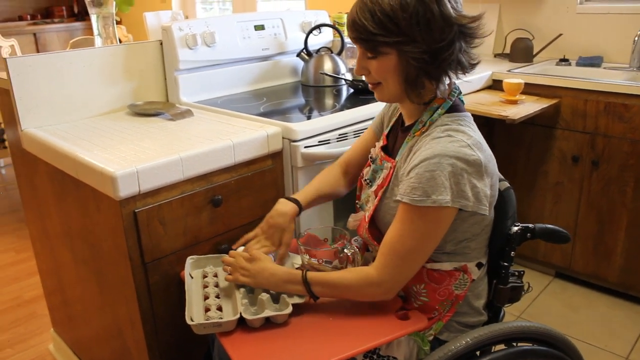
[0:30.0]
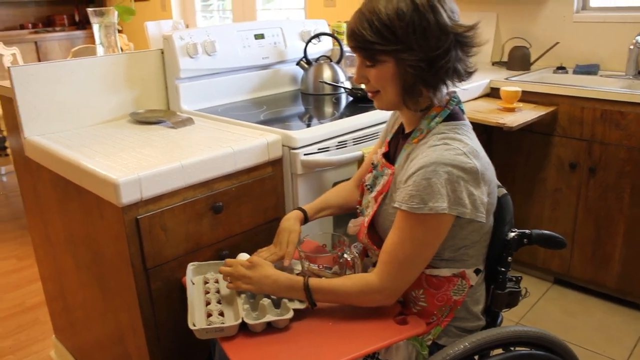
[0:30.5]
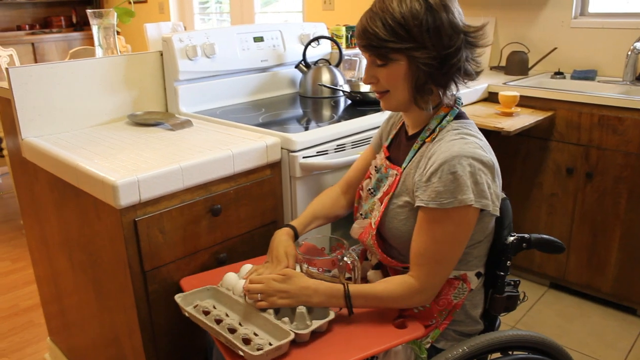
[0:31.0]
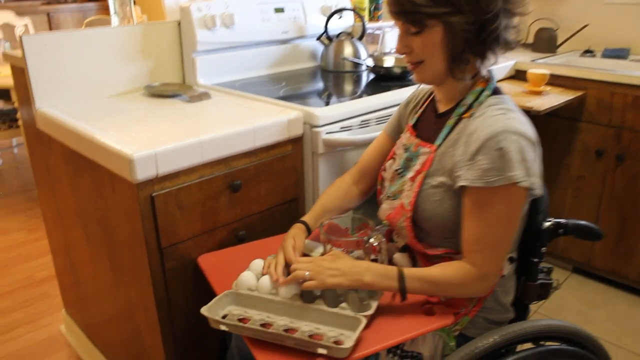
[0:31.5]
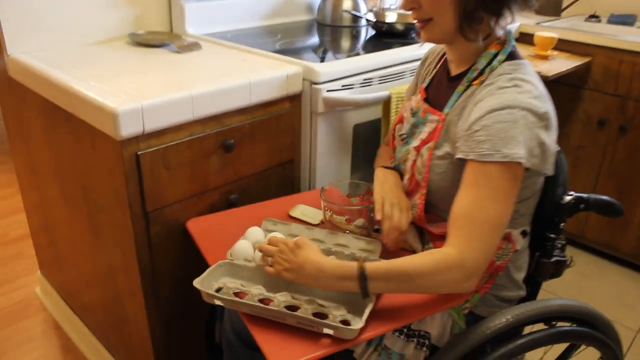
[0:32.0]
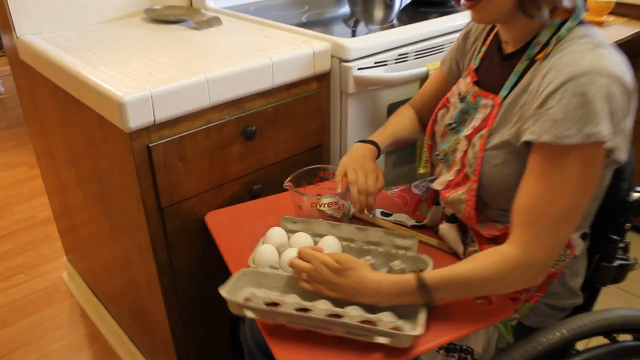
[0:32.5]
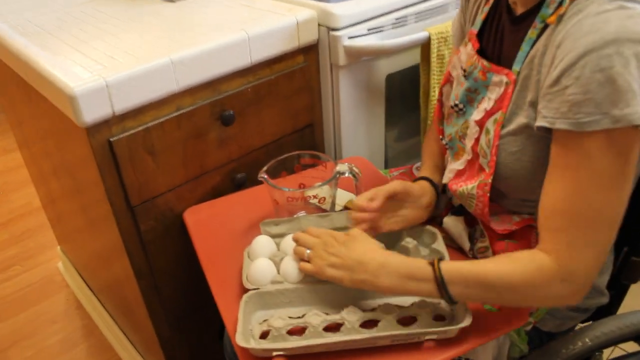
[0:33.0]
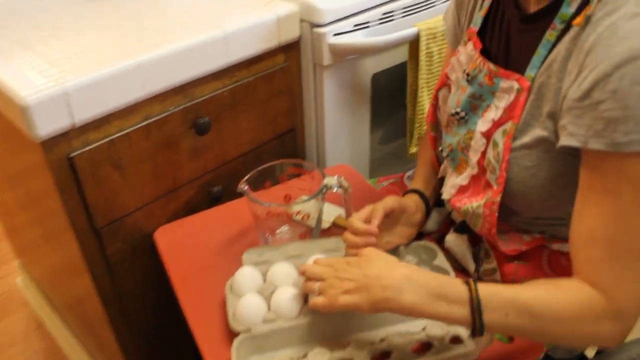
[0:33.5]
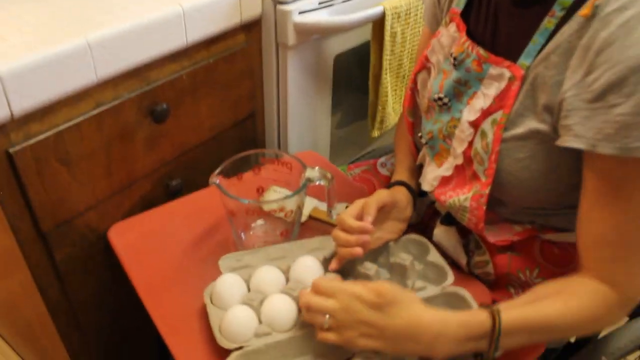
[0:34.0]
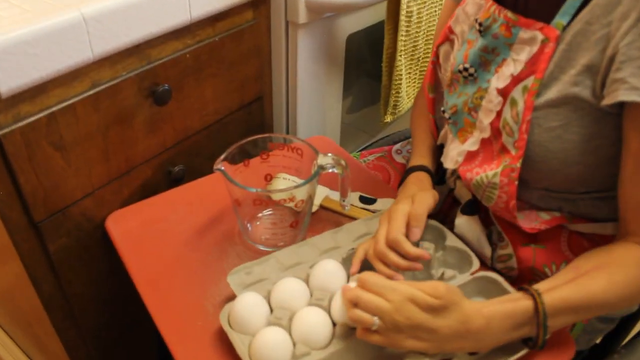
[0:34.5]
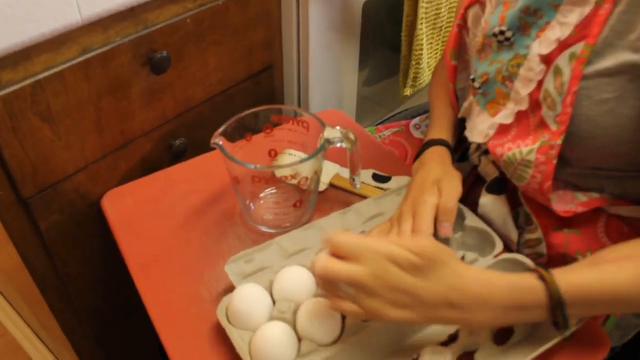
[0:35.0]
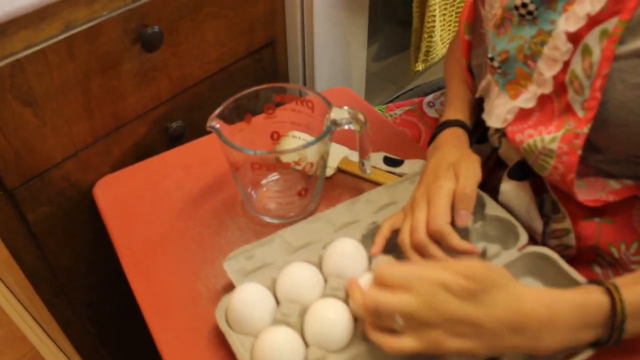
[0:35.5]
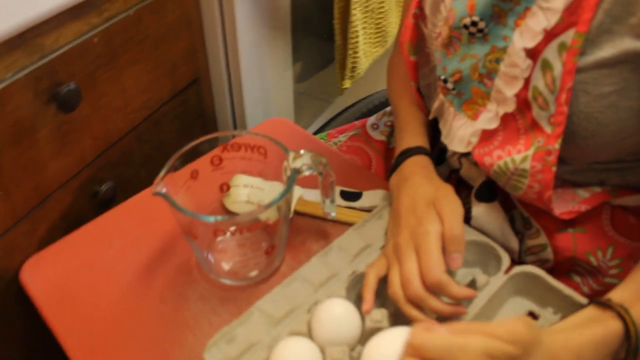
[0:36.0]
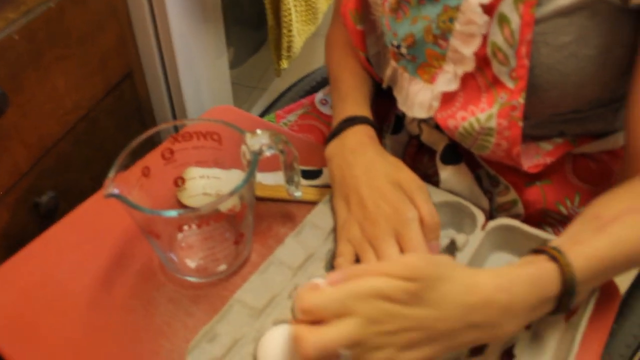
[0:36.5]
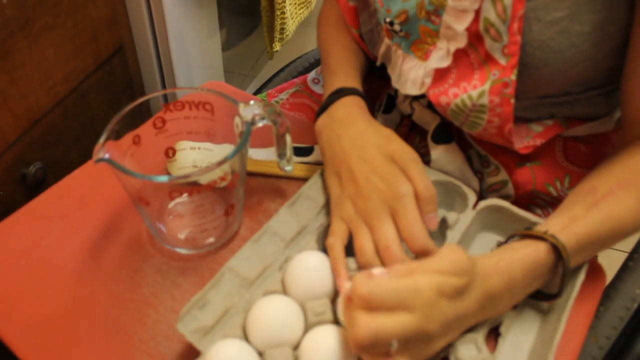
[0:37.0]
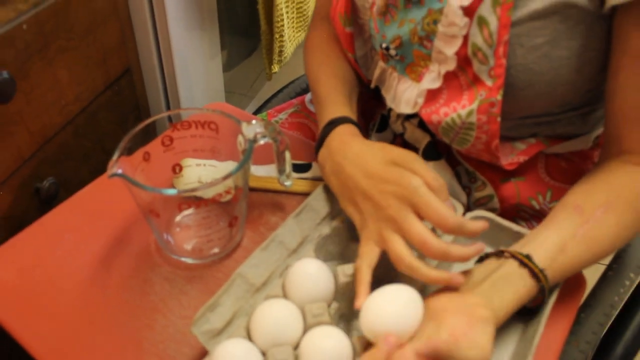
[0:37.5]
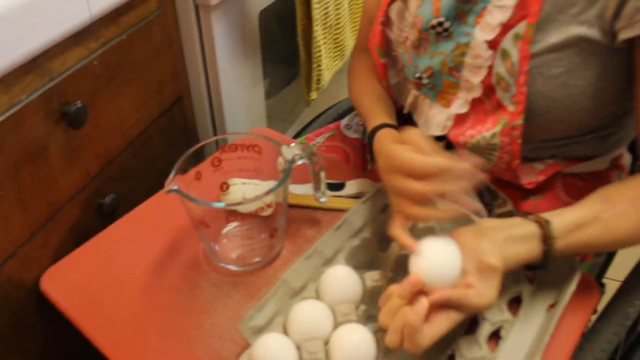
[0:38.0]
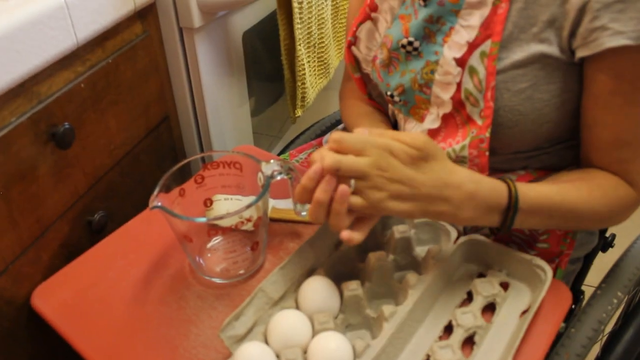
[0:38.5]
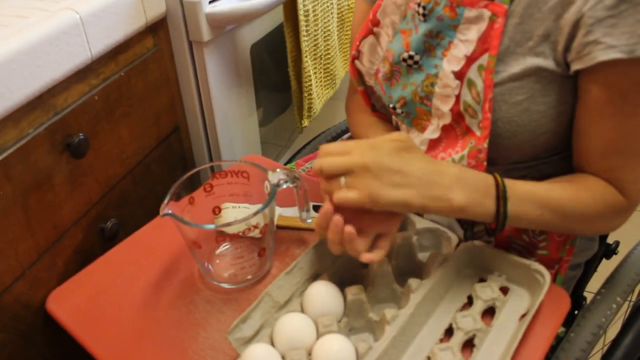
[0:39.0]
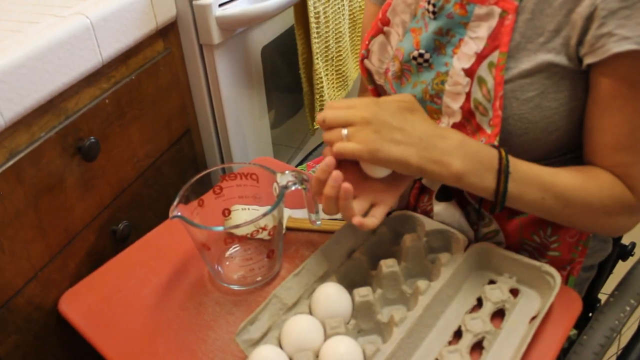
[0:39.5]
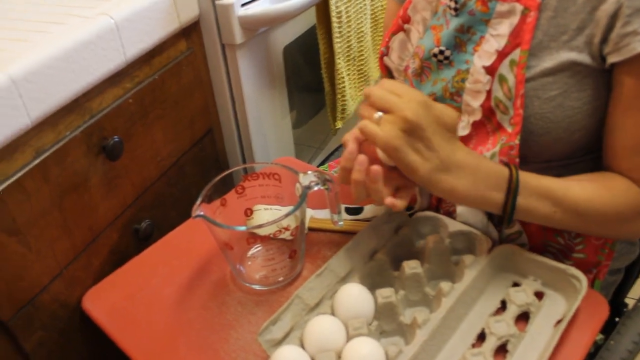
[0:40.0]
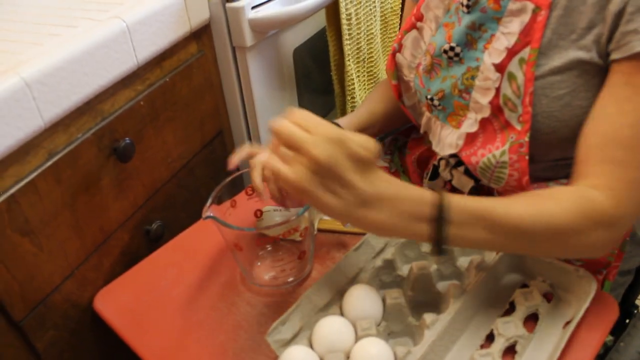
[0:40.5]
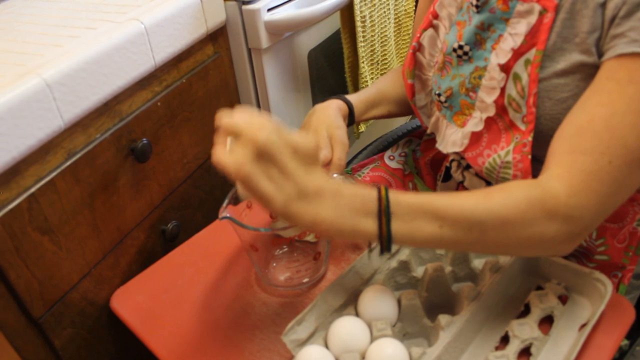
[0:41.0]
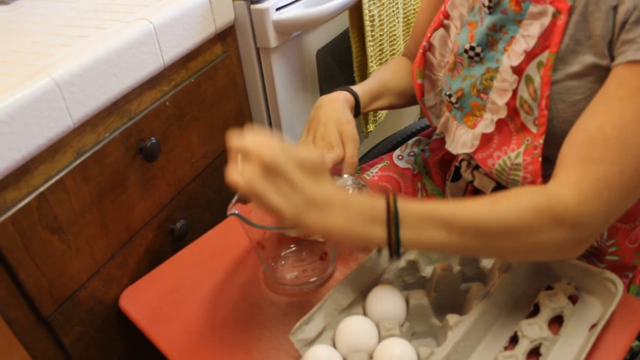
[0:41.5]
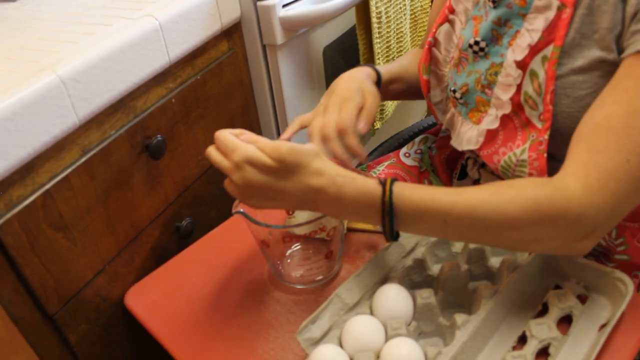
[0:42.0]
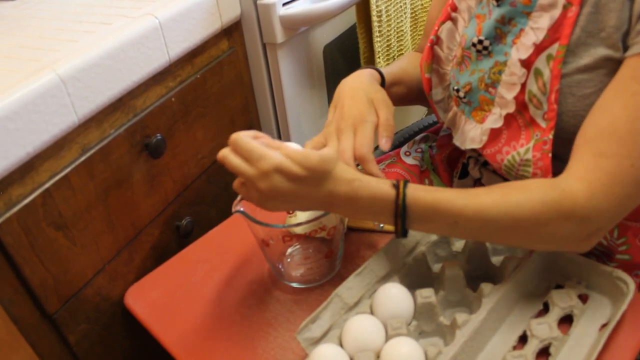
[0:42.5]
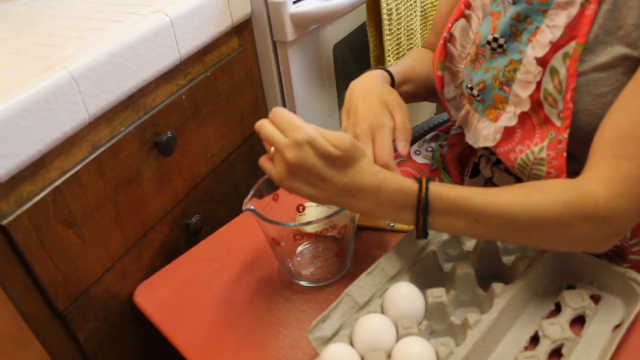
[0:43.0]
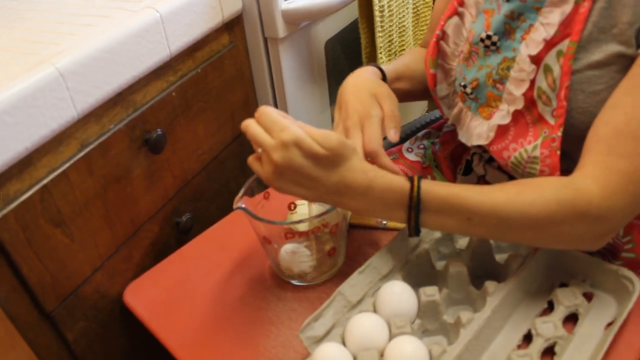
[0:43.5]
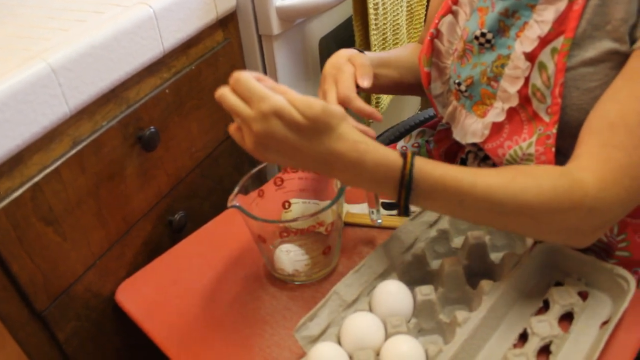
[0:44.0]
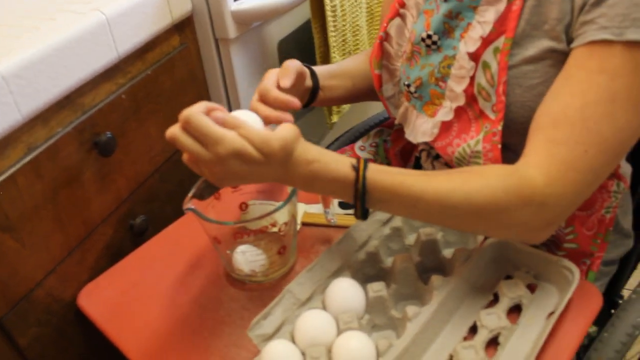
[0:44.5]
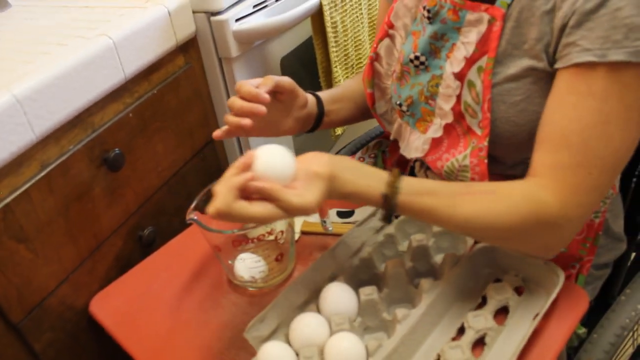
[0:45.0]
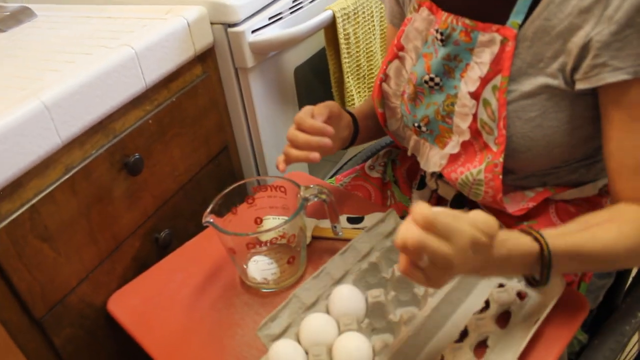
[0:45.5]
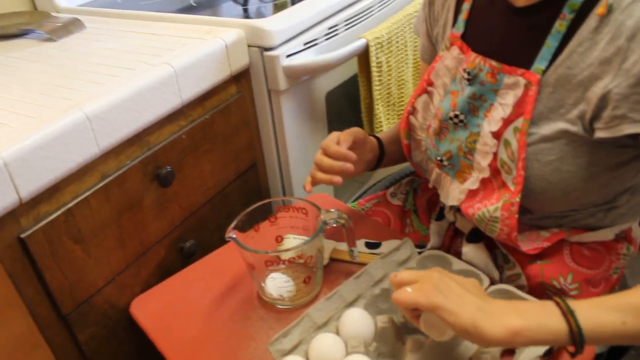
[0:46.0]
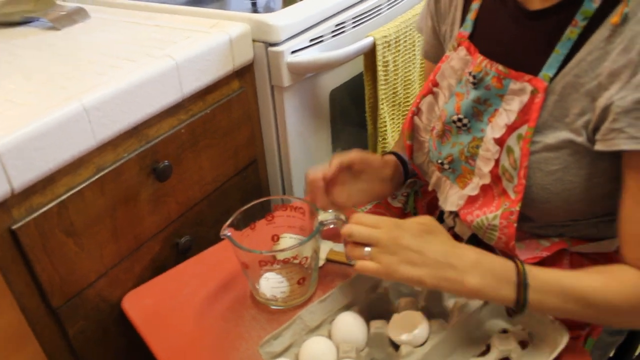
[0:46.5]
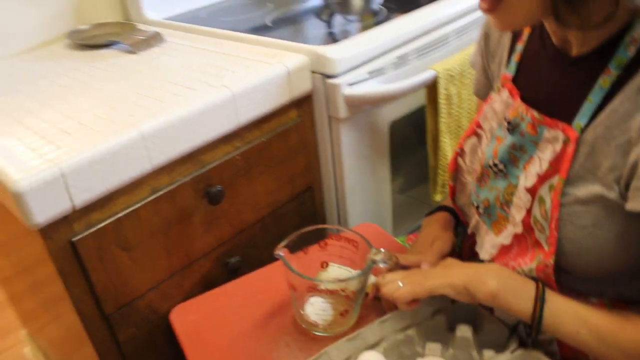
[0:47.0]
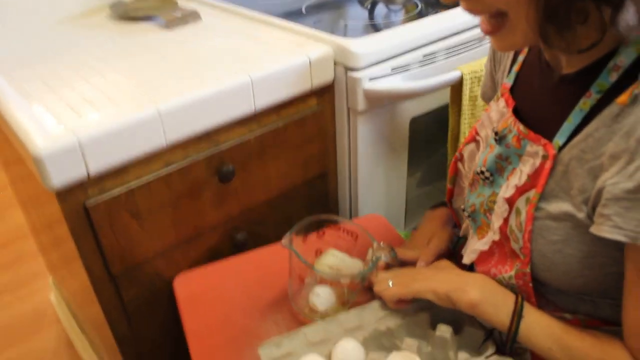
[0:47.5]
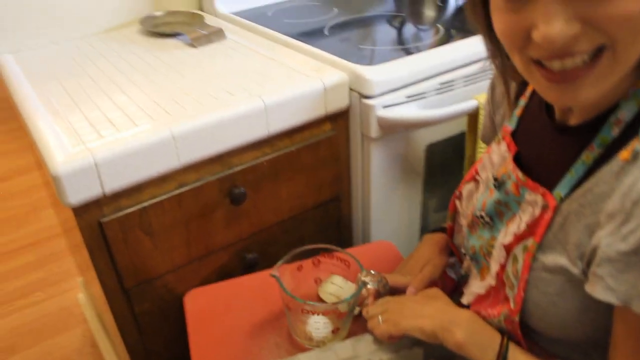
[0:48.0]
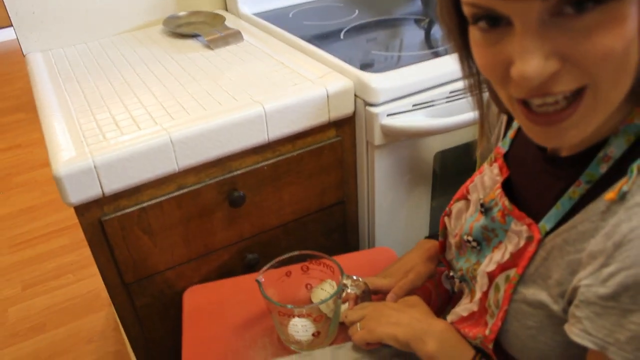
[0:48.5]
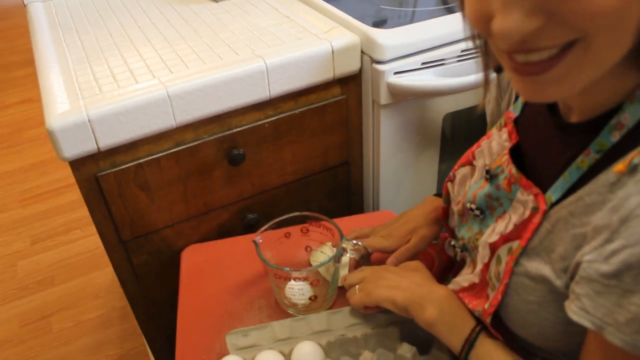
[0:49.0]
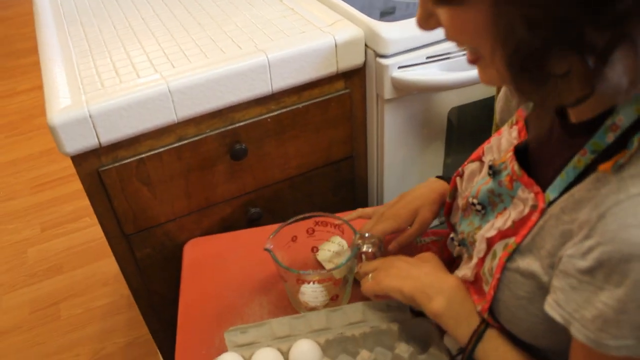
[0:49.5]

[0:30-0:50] In the wheelchair by the kitchen counter, the woman has a cutting board tray on her lap holding a carton filled with about half a dozen eggs and a measuring cup. She moves the egg carton around, trying different strategies to get the eggs out with her deformed hands: she rolls an egg with one hand and uses the pinky of her other hand to scoop it out, using both hands to take the egg from the carton. Once it is out, she holds the egg in her hand, taps it on the glass measuring cup, and cracks it into the cup. It looks like some eggshell ends up in the measuring cup.